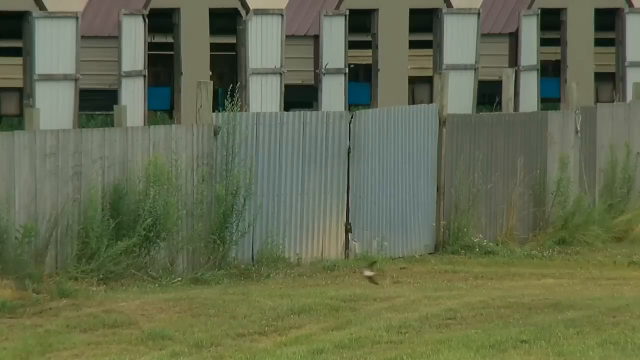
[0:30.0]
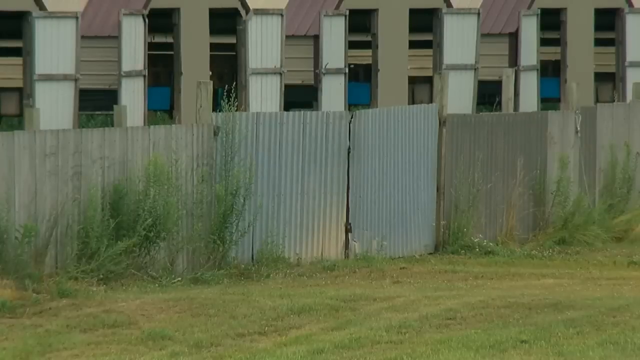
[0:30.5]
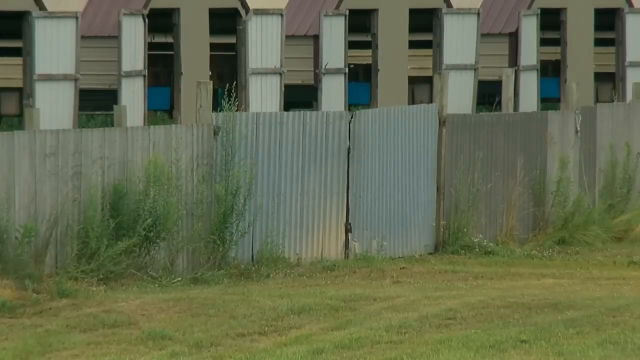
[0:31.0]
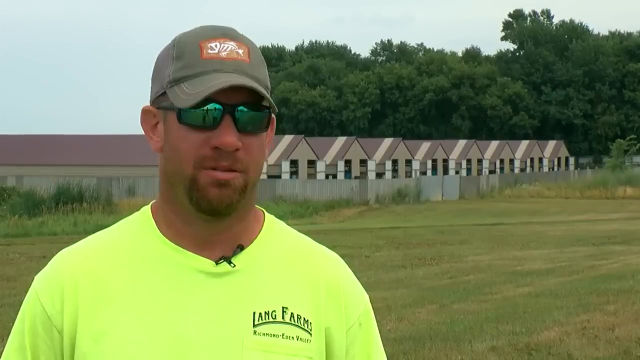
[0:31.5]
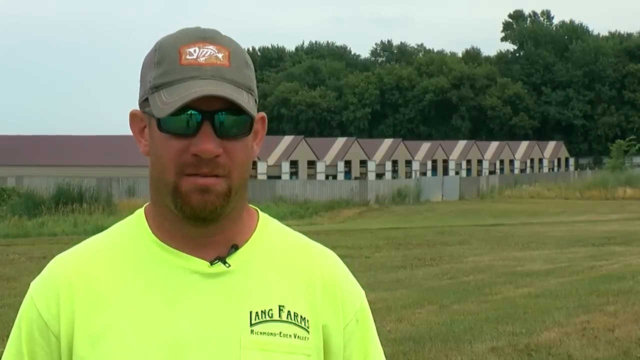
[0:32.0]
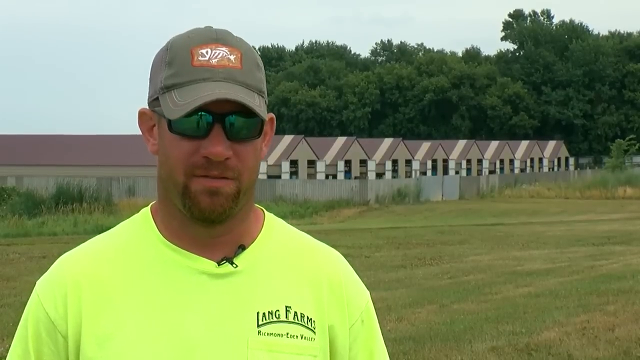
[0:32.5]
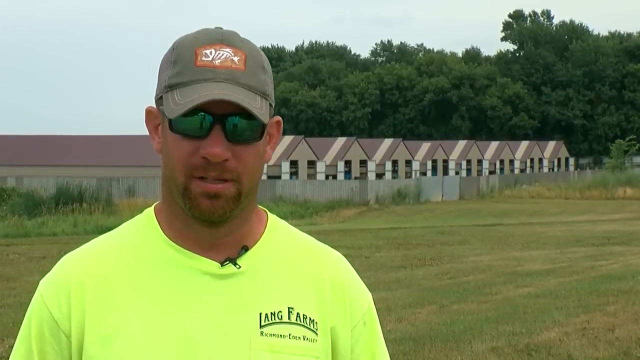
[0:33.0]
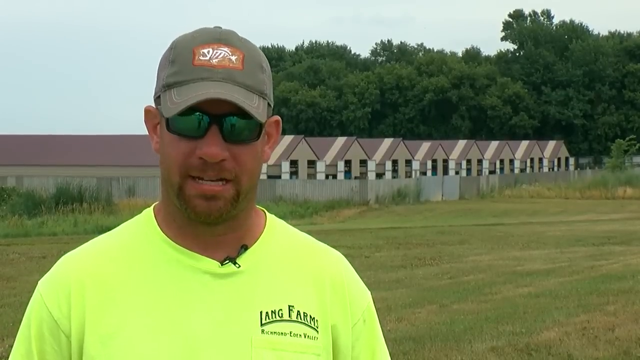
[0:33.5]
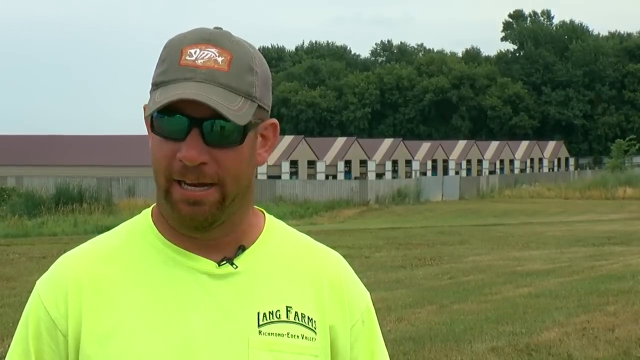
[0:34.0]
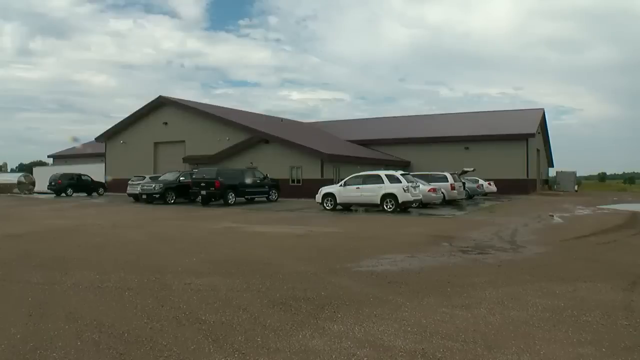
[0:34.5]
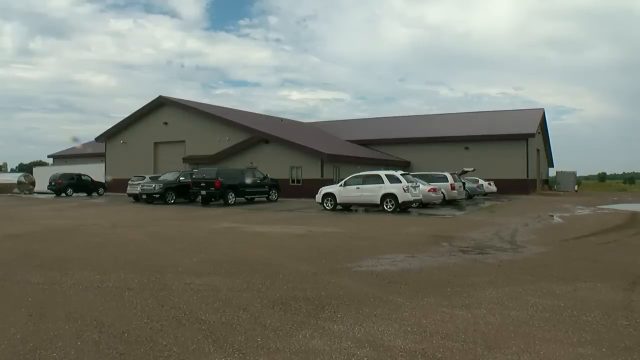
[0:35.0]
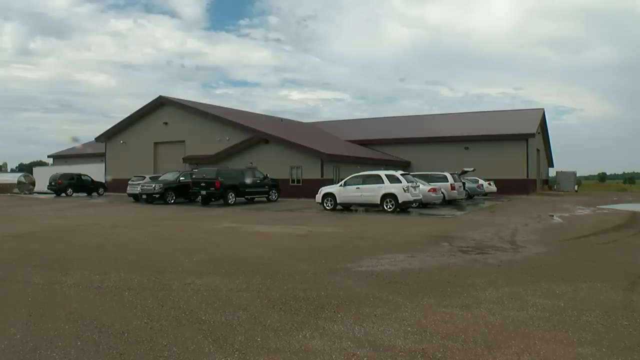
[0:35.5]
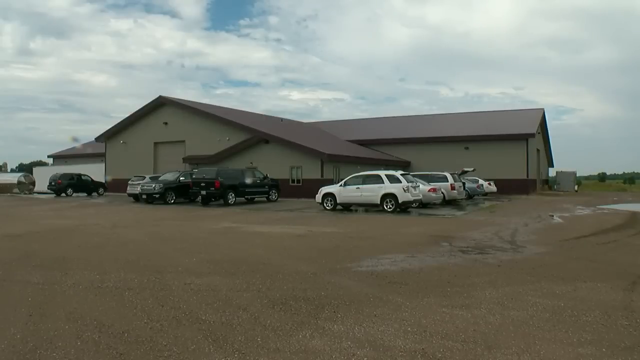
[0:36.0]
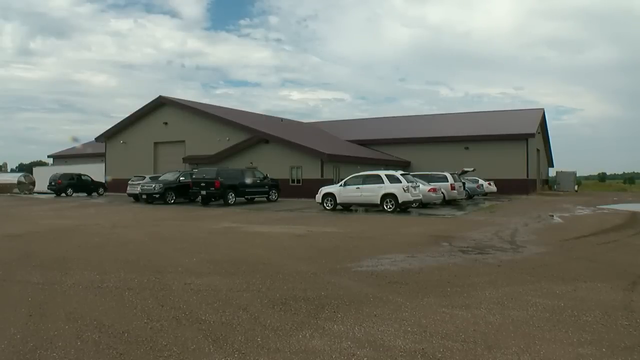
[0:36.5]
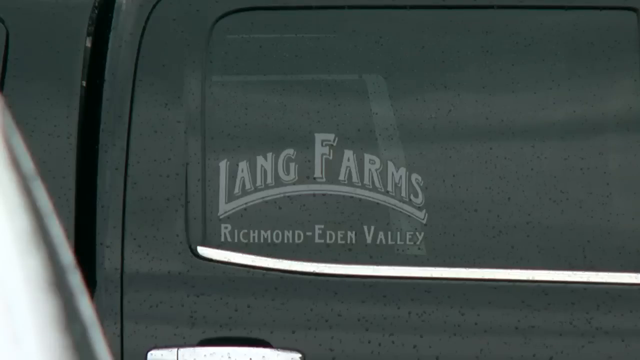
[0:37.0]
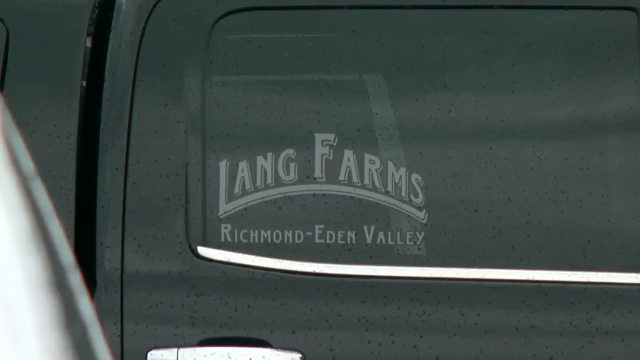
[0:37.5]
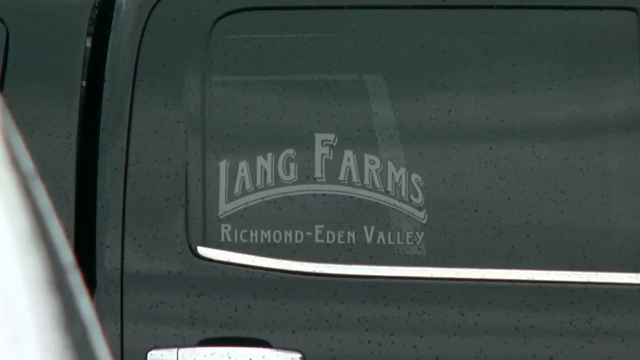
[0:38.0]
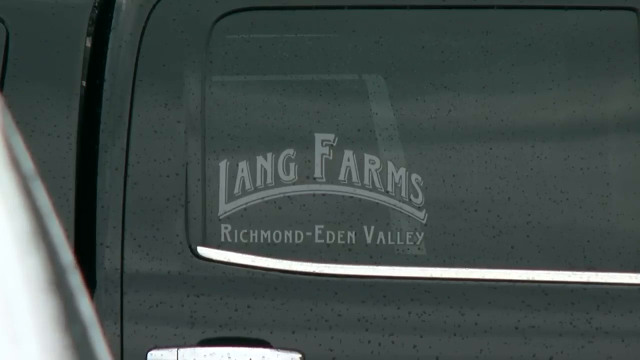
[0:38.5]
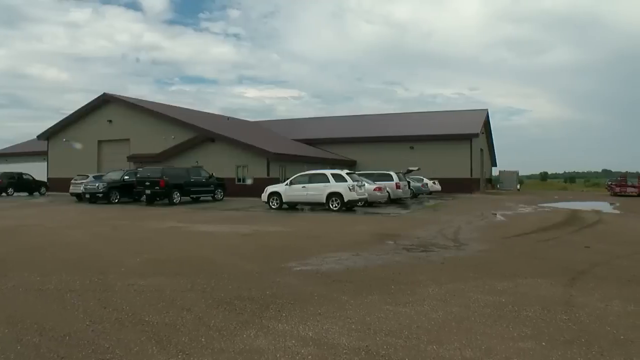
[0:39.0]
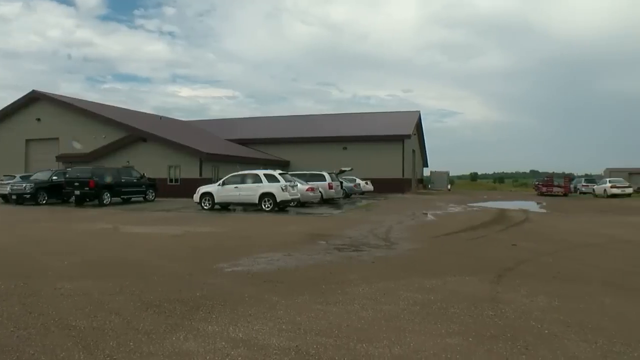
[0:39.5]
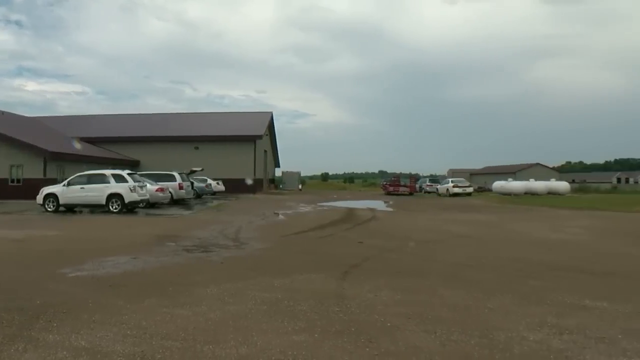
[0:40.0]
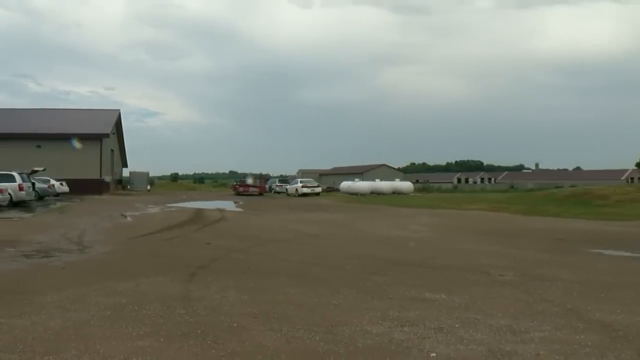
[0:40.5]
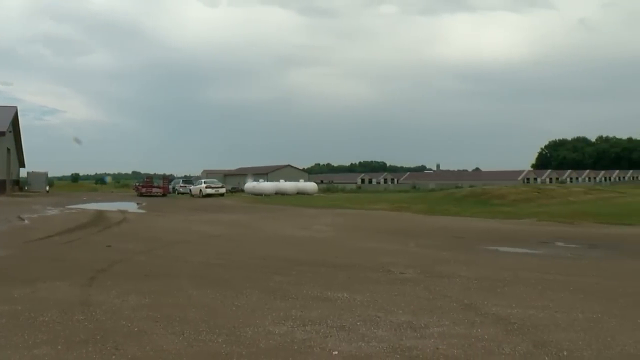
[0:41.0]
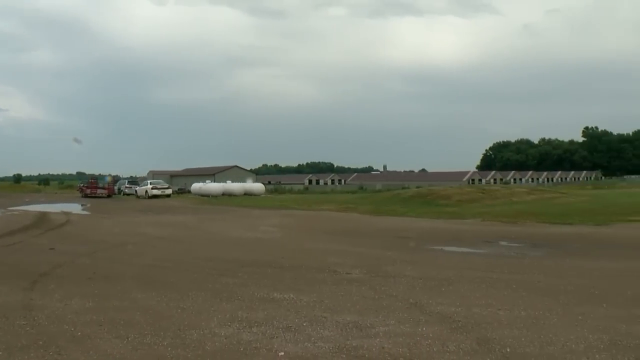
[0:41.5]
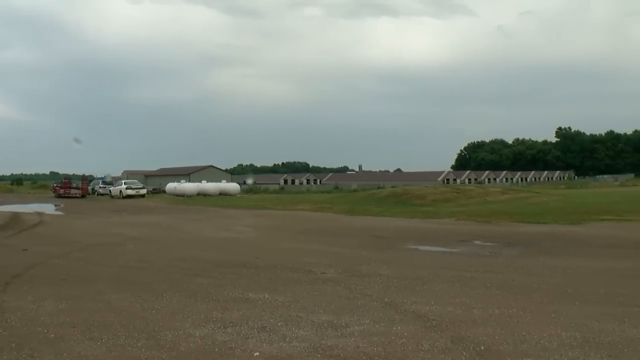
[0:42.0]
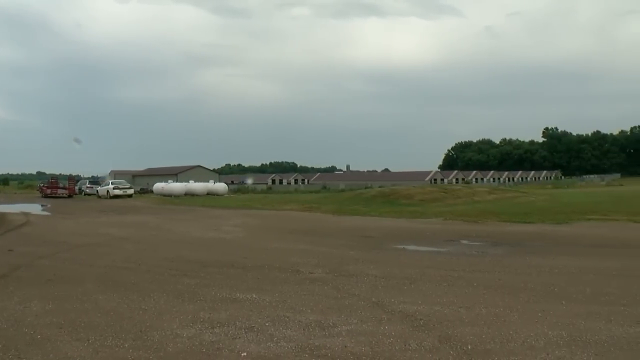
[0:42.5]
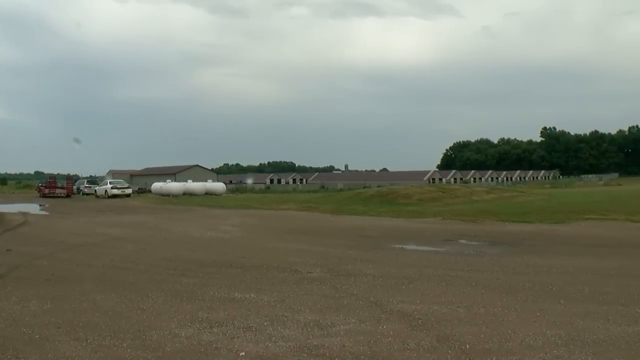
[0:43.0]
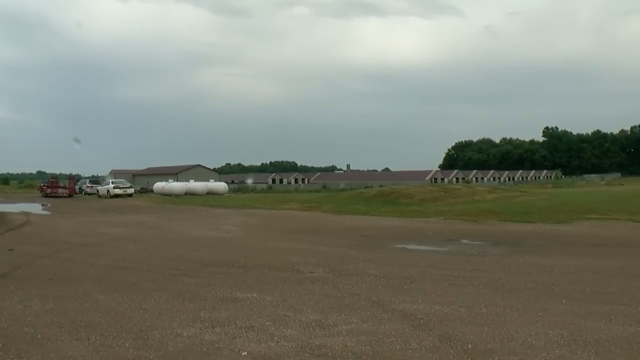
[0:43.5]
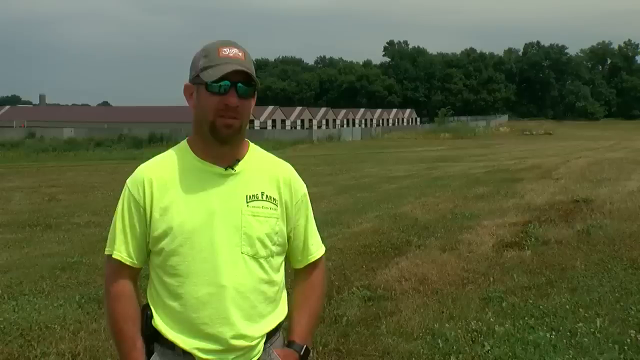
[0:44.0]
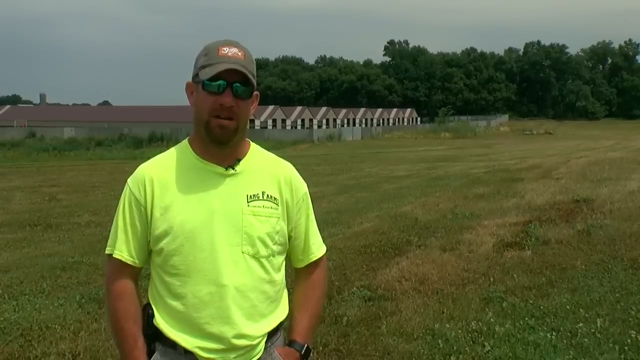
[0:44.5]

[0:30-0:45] A shot of the mink farm's fence area shows what seems to be a crack in the fencing, as if it might have been broken or damaged. The video cuts back to the man in the neon green shirt giving his interview, then to a shot of the parking lot, with about five cars lined up on the right side of the building and another three or four cars on the left side. The building looks like a large facility, kind of homestead-style, like a house but maybe 20 times bigger. A large silver tank is off to the left. A close-up of the window of one of the trucks shows "Lang Farms, Richmond Eden Valley" on it. The camera then pans to the right, revealing the coops or mink houses, a couple more cars, a trailer, and storage tanks, possibly for propane, sewage or water. Much more of the mink housing area is visible, with at least 20 or 30 mink coops.